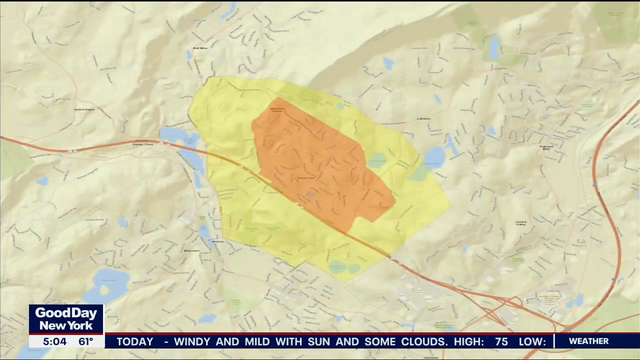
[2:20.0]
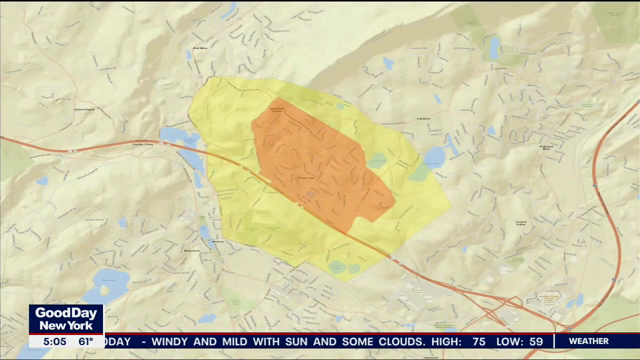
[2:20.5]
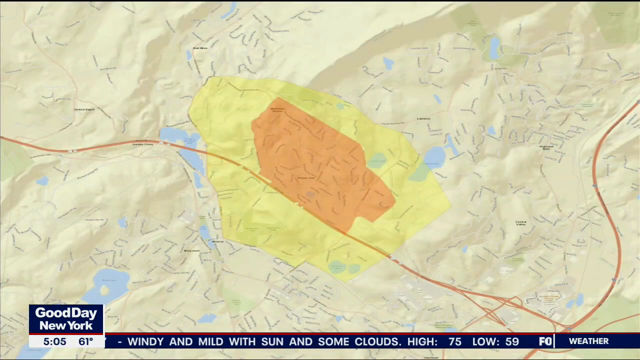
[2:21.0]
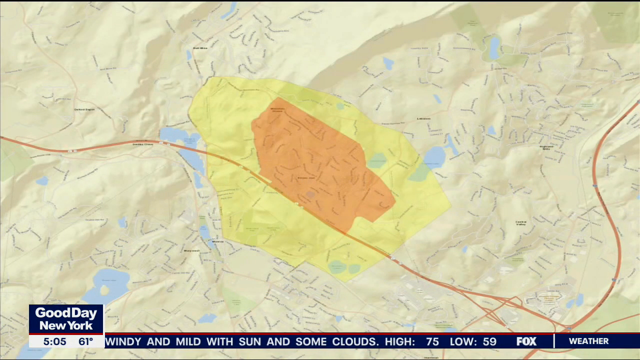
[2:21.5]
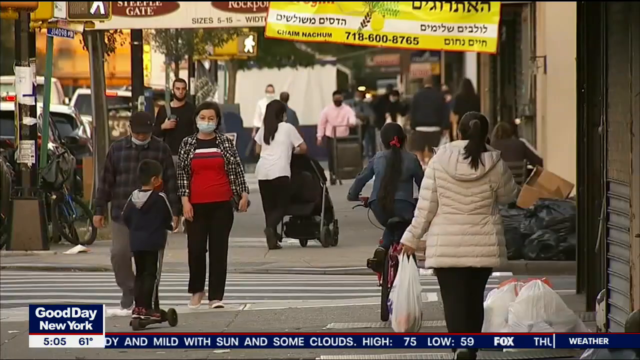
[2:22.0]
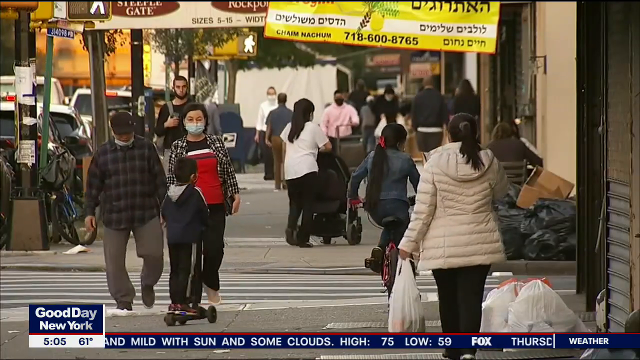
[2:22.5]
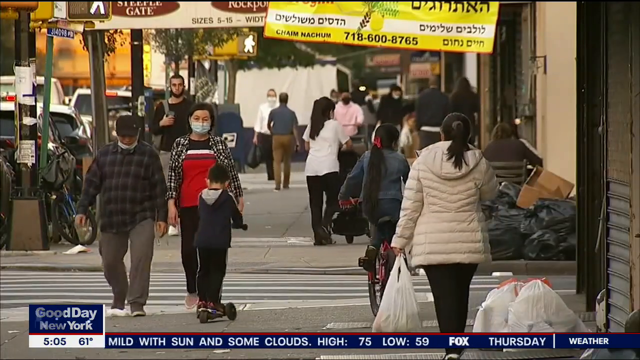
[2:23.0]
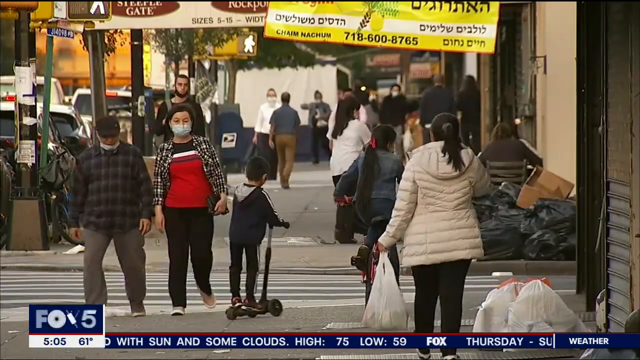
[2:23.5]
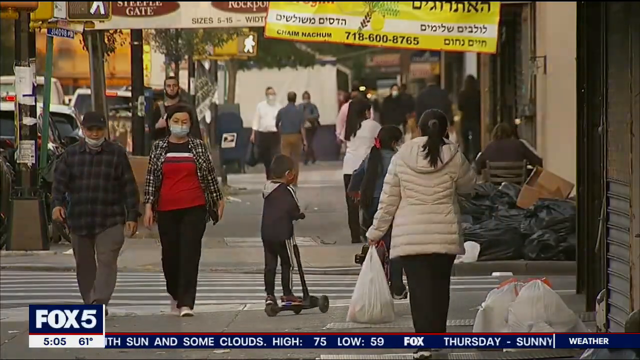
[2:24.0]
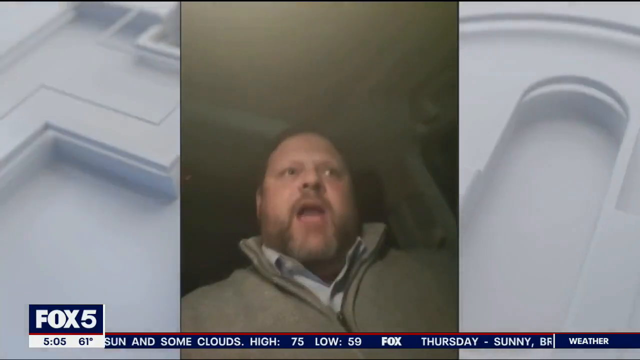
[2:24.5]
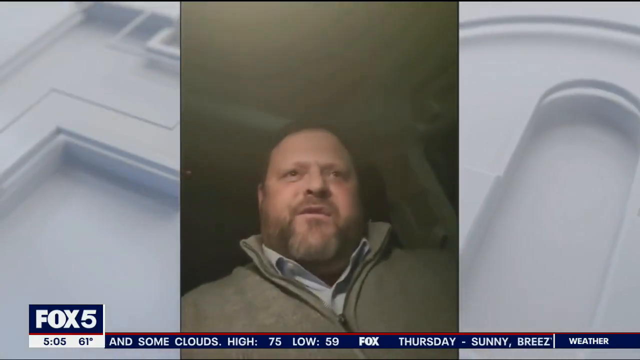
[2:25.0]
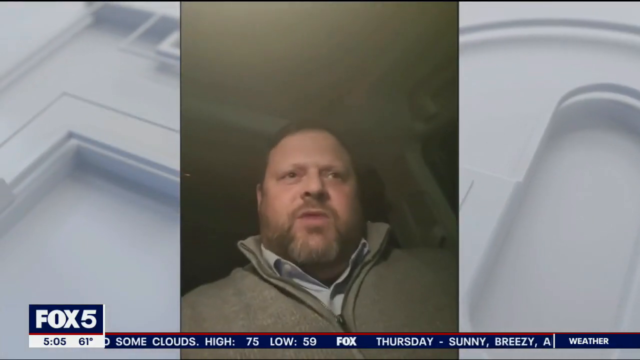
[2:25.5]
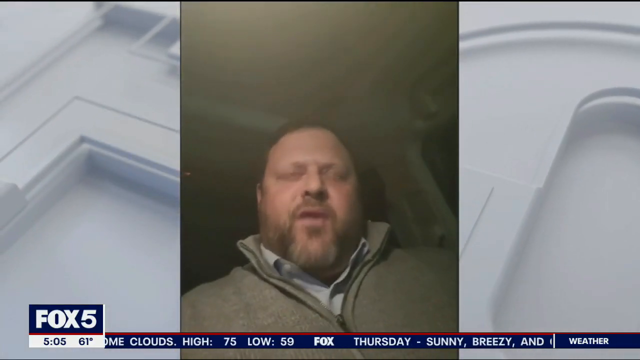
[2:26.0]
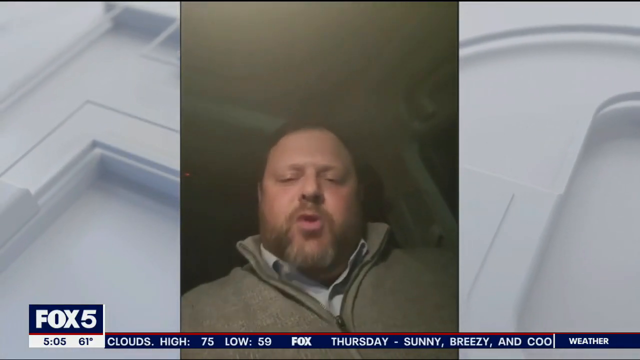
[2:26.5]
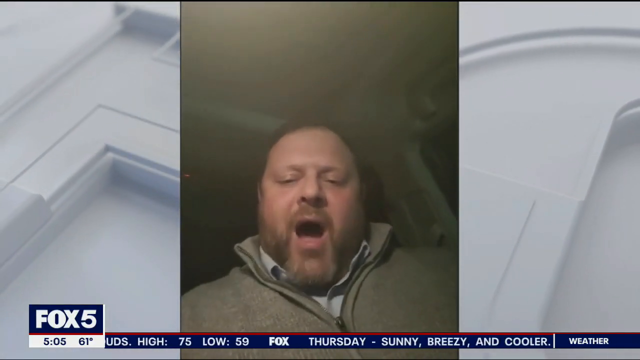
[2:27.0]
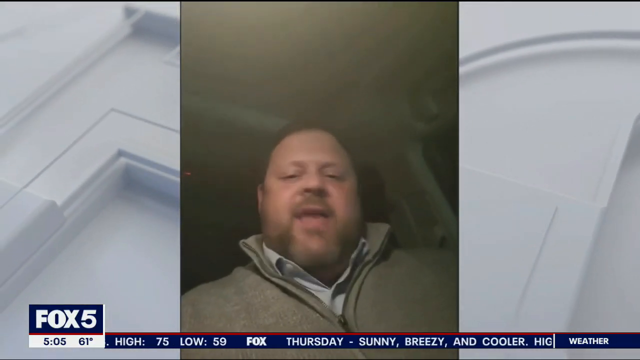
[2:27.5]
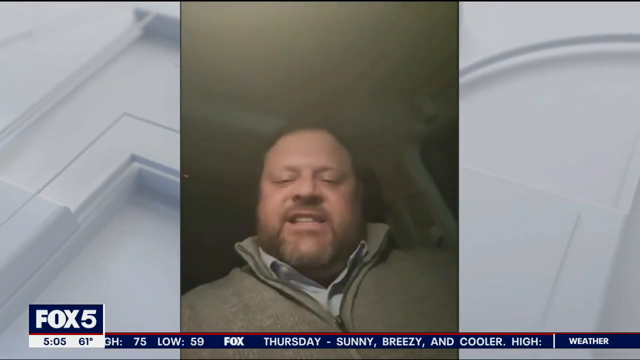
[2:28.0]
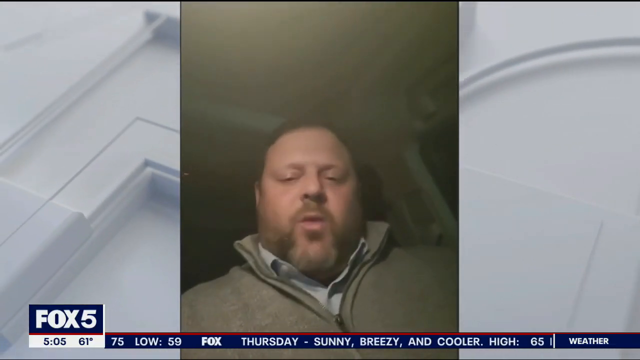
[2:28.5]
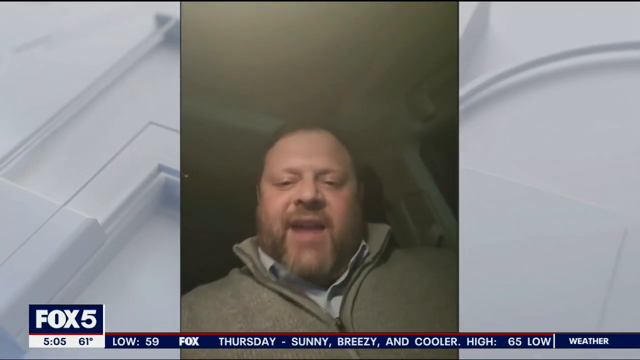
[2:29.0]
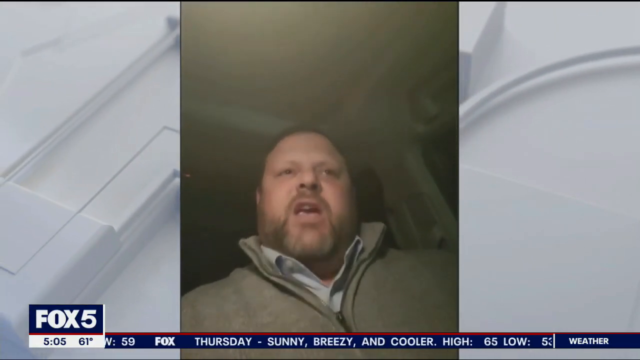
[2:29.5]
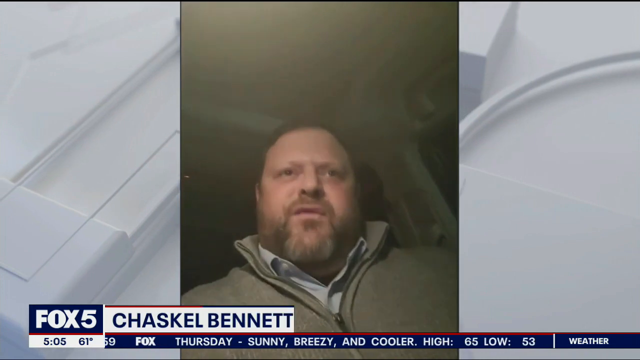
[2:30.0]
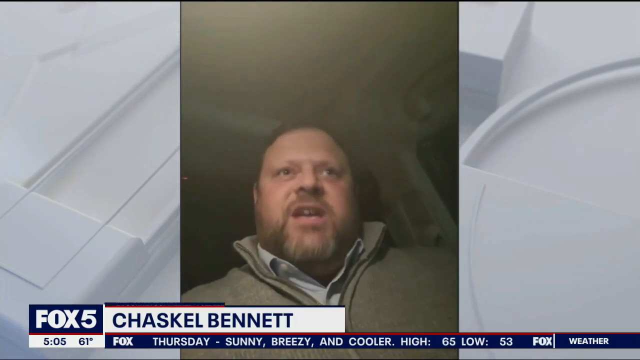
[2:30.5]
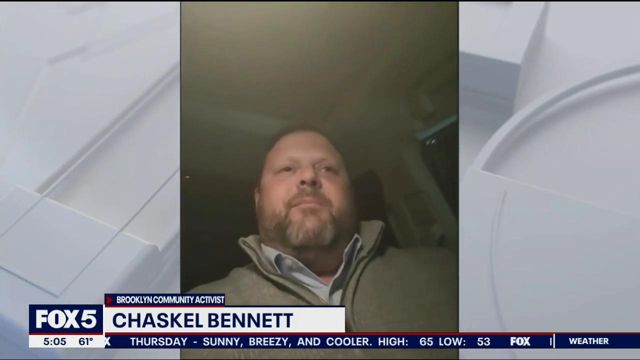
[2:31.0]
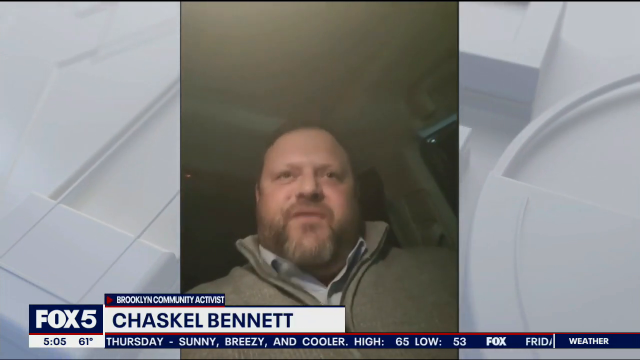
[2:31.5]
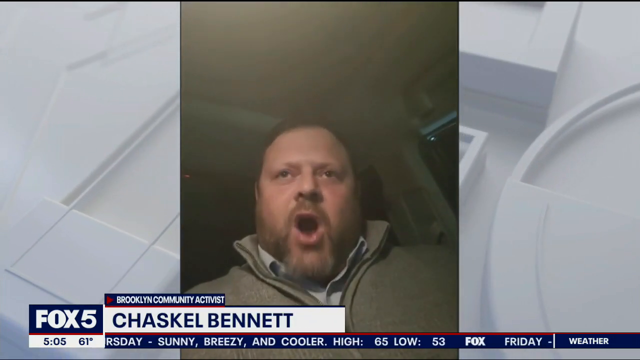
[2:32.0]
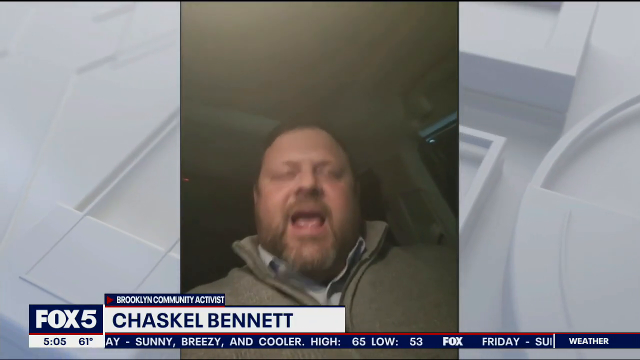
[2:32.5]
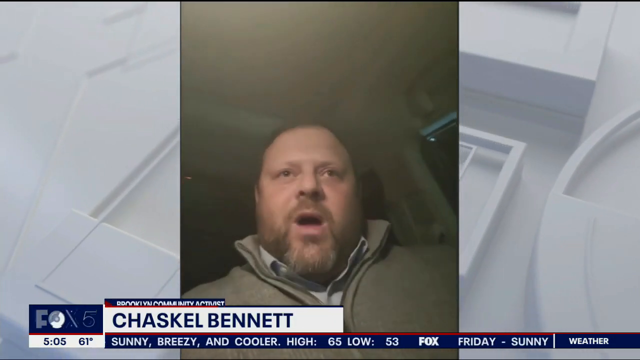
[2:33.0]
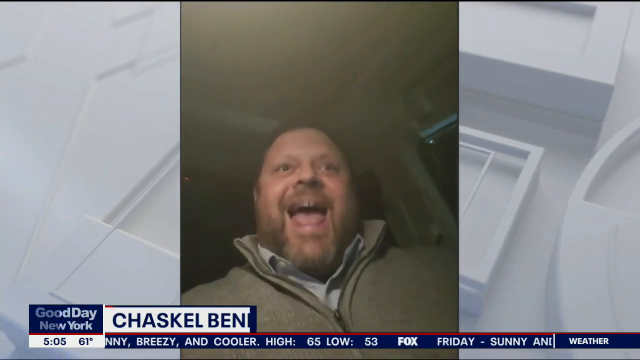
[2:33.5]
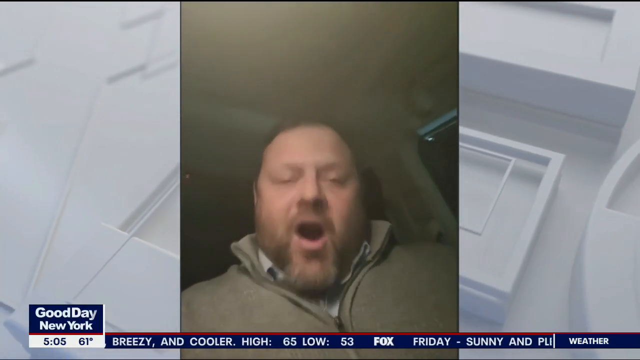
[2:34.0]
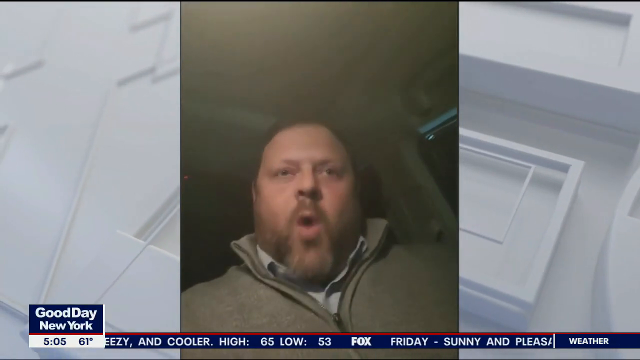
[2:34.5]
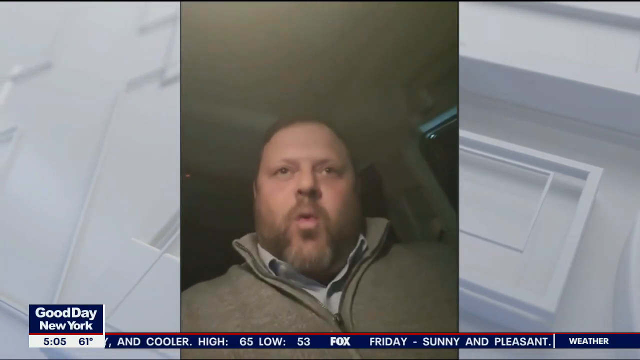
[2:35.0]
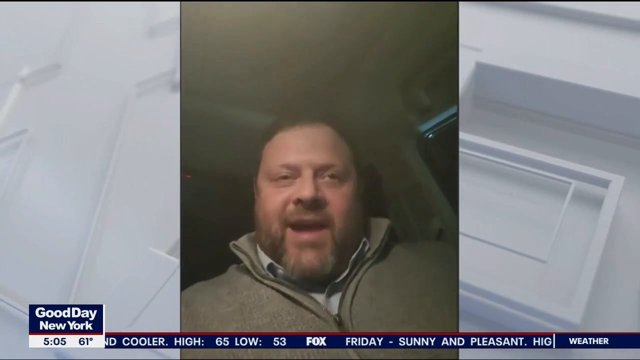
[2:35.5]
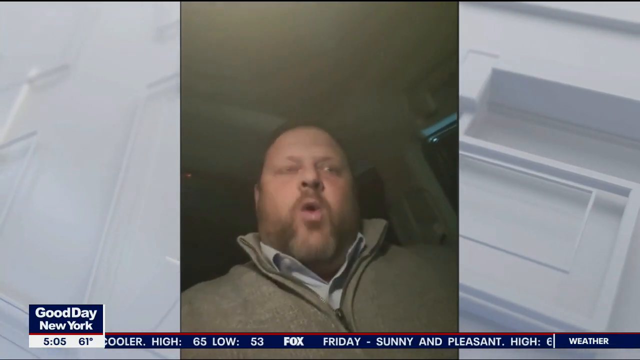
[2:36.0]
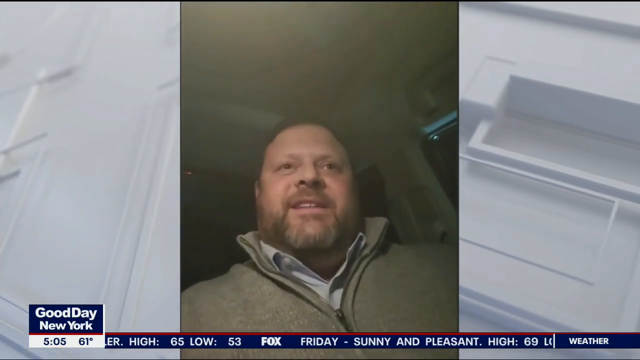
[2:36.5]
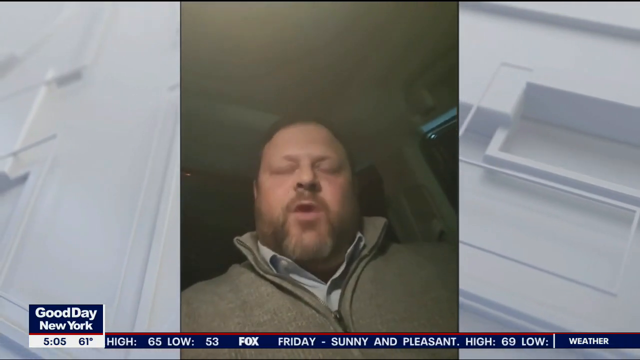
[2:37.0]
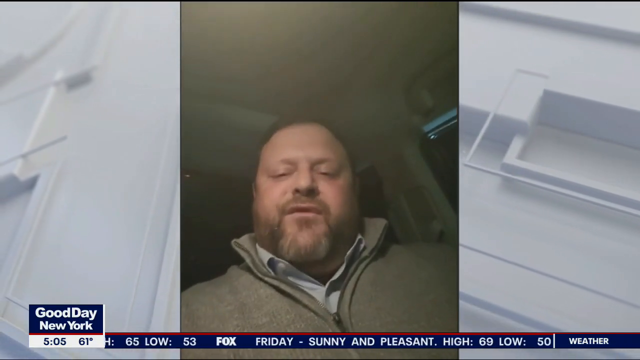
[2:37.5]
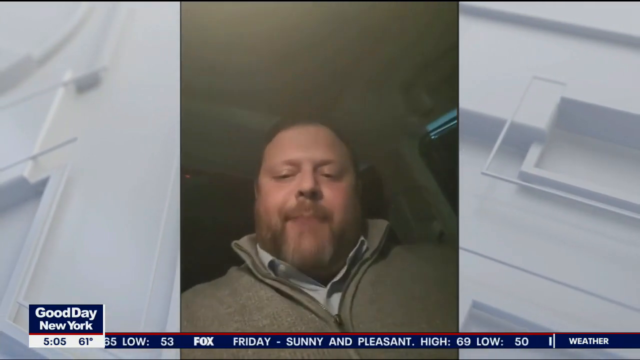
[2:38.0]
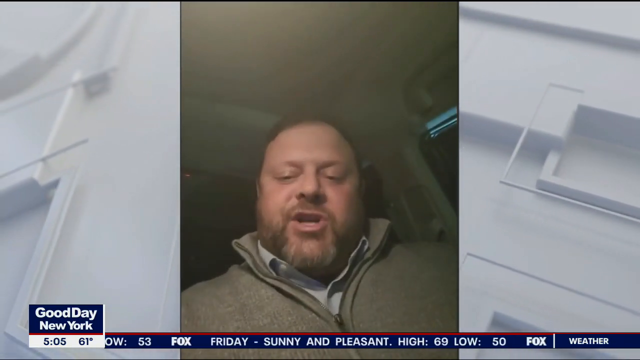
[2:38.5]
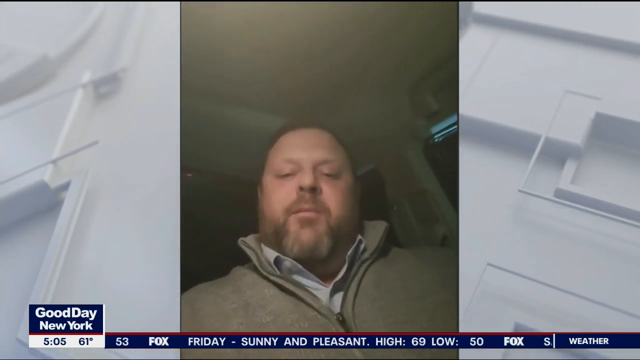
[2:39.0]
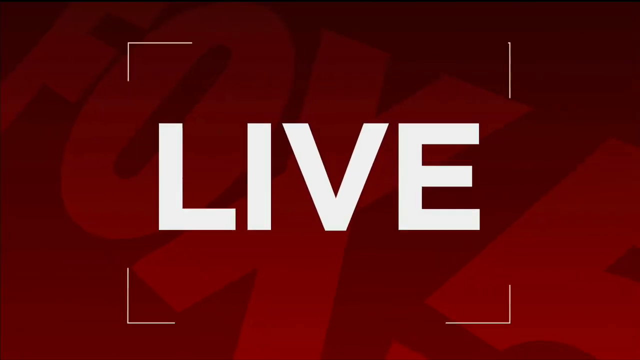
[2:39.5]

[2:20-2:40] The image changes to a zoomed-out map of New York focusing on the yellow zones. The video switches to people walking down a street in daytime, most of them wearing face masks. There are some Hebrew banners in the background and some trash on the right-hand side of the street. A video appears on the white Fox background, shown vertically in the centre: a camera phone recording of a man sitting in a car, filmed from low down looking up towards his face. He looks very angry, speaks with passion, and shakes his head, looking frustrated. Text slides in from left to right at the bottom in a white rectangle, reading "Chaskel Bennett" in navy; above it, a smaller navy rectangle appears with white text reading "Brooklyn Community Activist". The man appears very aggressive, yelling towards the camera, and looks down into the camera as he speaks. The screen then turns red and the word "live" appears in large white text, starting small in the centre and appearing to zoom out until it is large on the screen, where it settles.